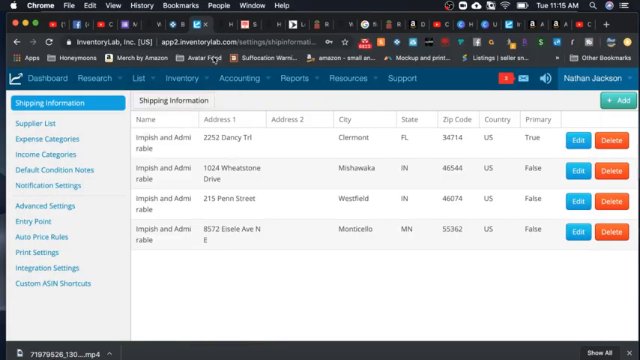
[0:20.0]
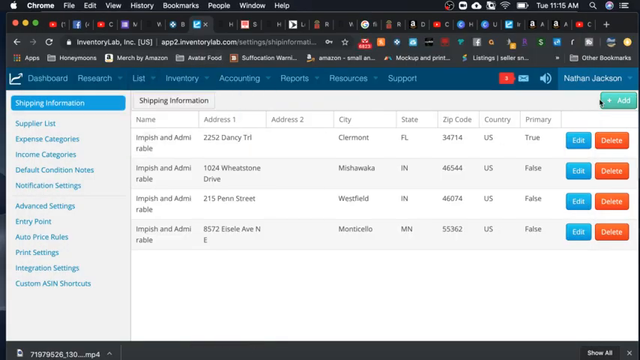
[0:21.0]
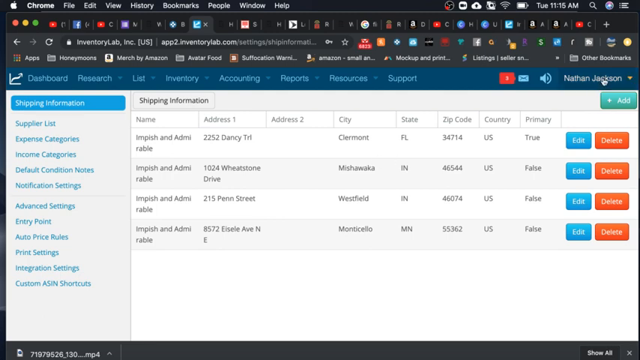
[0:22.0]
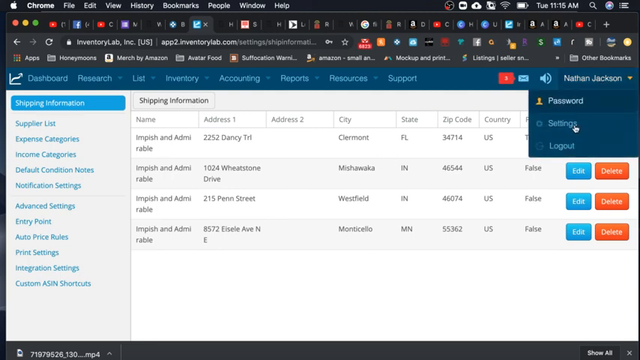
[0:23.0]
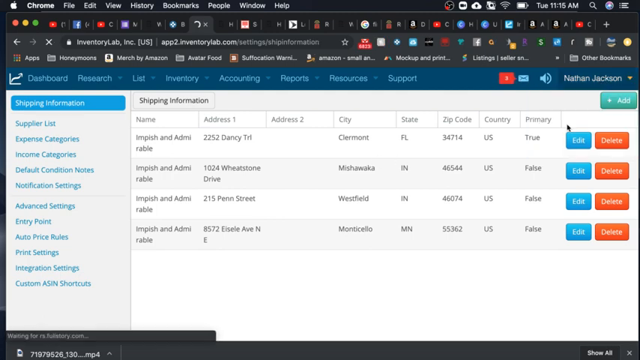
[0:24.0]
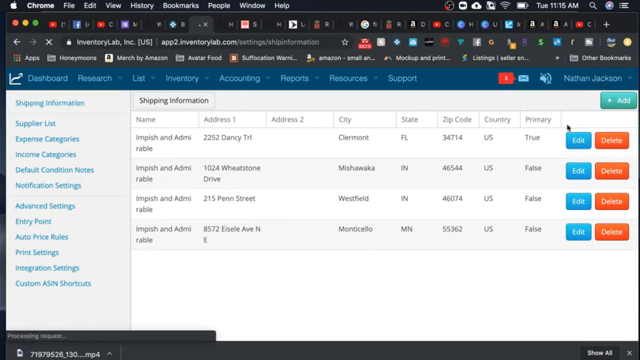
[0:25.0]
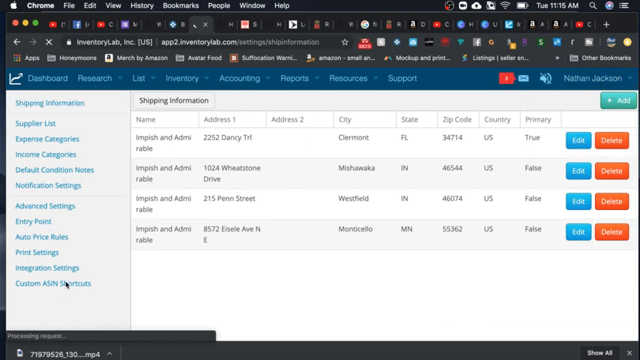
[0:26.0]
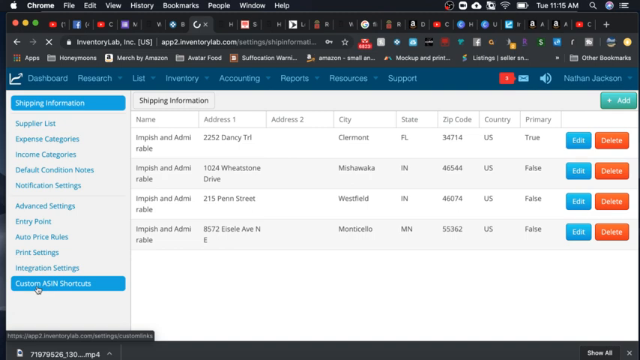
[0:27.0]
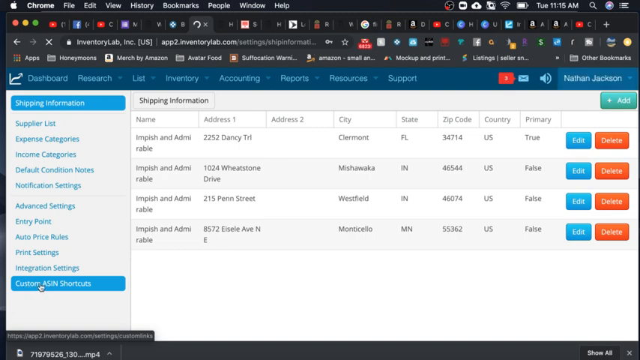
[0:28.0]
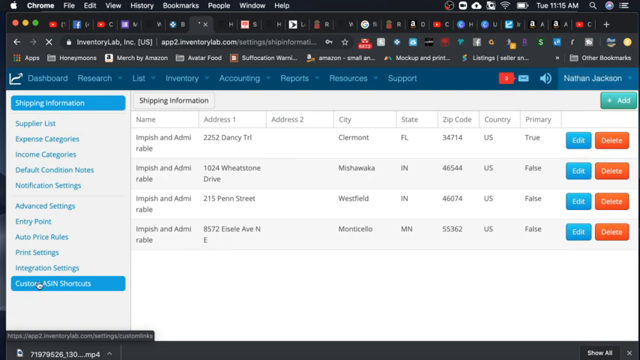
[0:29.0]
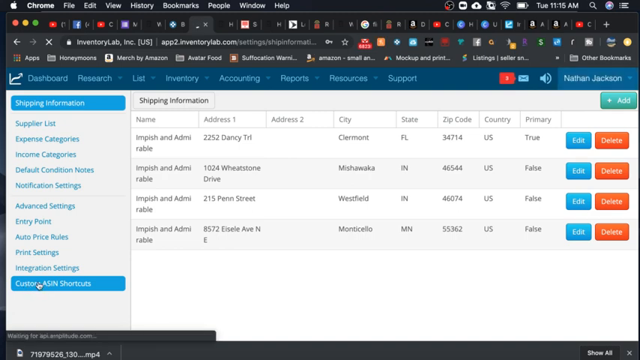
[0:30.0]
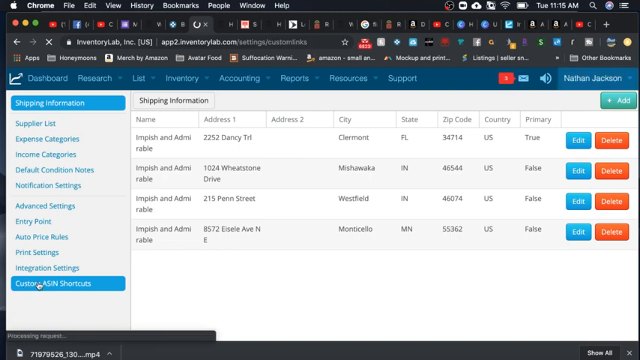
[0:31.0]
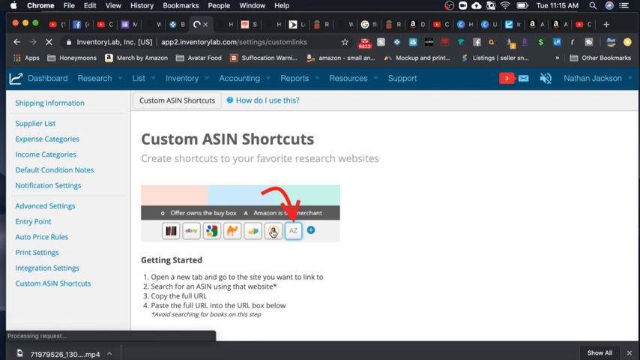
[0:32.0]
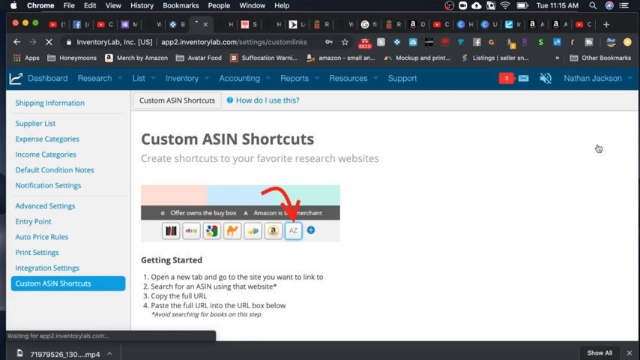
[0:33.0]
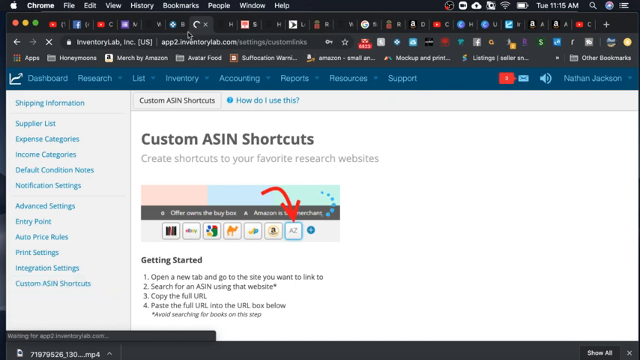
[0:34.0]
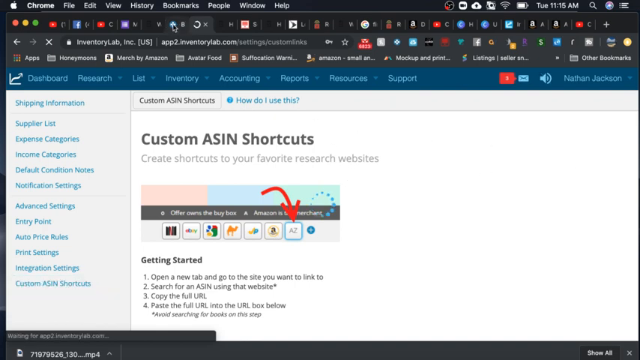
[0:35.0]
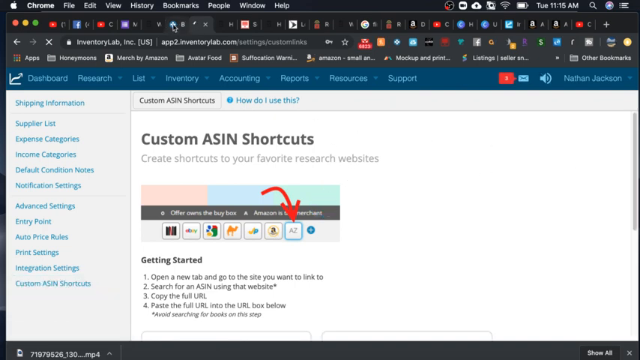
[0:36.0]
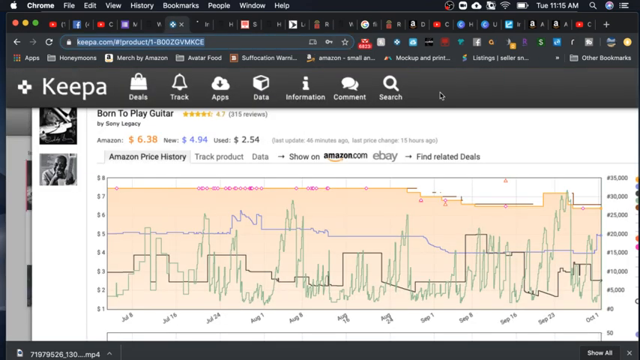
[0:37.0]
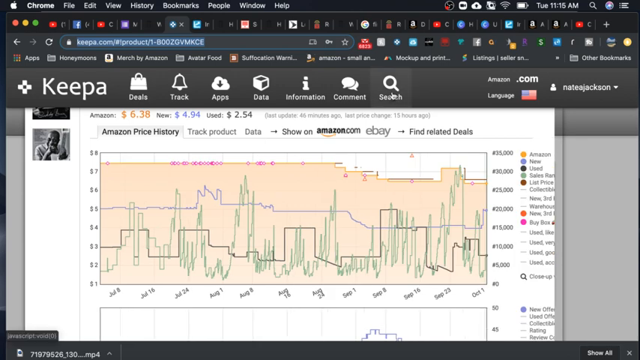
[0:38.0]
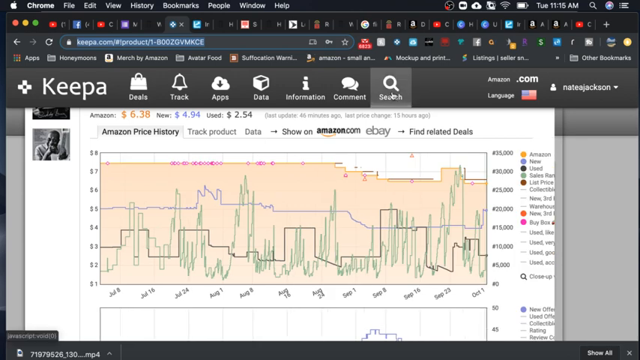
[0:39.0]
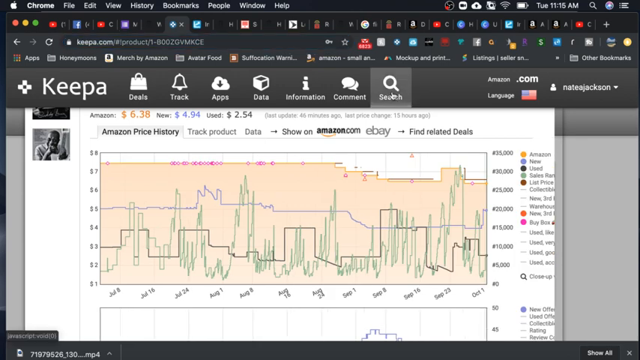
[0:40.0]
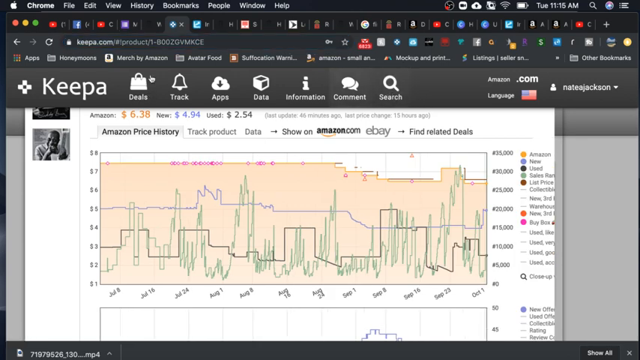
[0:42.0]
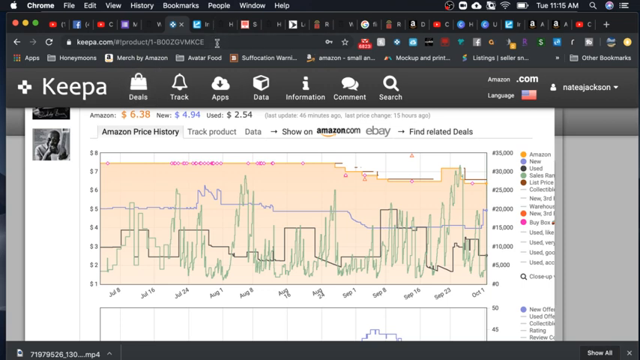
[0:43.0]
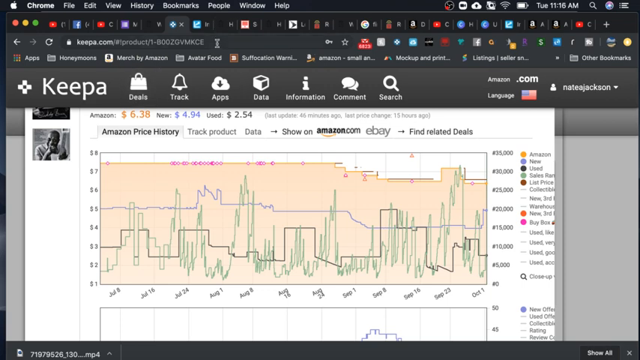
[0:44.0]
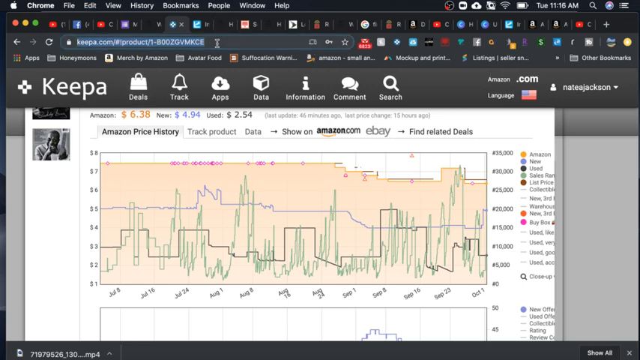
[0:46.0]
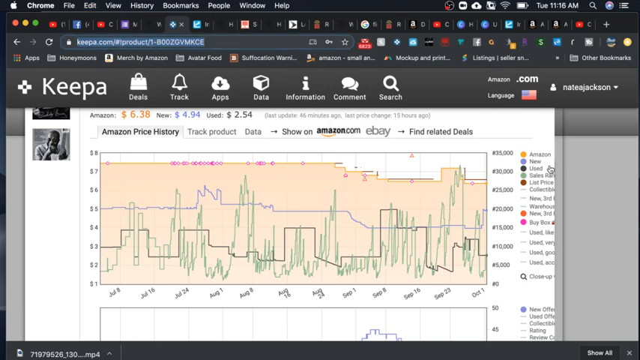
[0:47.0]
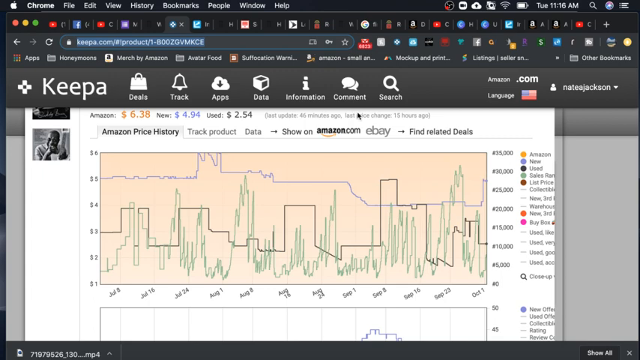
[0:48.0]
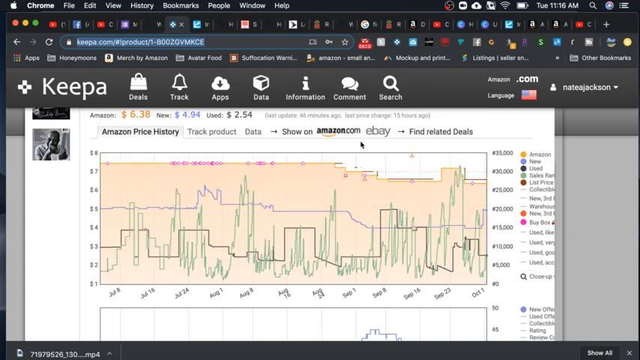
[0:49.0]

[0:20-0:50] The browser shows an interface with a blue bar across the top reading "Dashboard, Research, List, Inventory, Accounting, Reports, Resources, and Support," with a little dropdown triangle next to each item. At the top right it says "Nathan Jackson," with shipping information beneath that, and there is a menu of links on the left. The website is white with light blue text. The mouse cursor moves up to the right and clicks the Nathan Jackson dropdown, then moves to the very bottom of the list of links on the left and clicks "Custom ASIN Shortcuts." A new page opens that says "Custom ASIN Shortcuts" and shows a small graphic with a line of buttons. The browser has multiple tabs open, and the cursor moves up to one of them, switching to another program called Keepa, which shows a large graph with many lines.